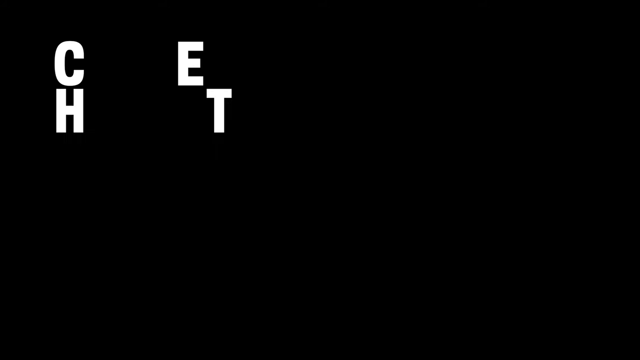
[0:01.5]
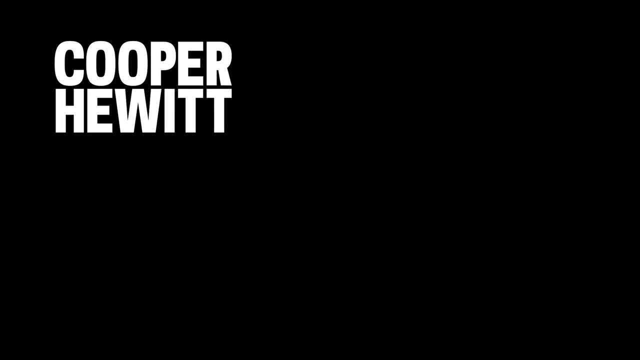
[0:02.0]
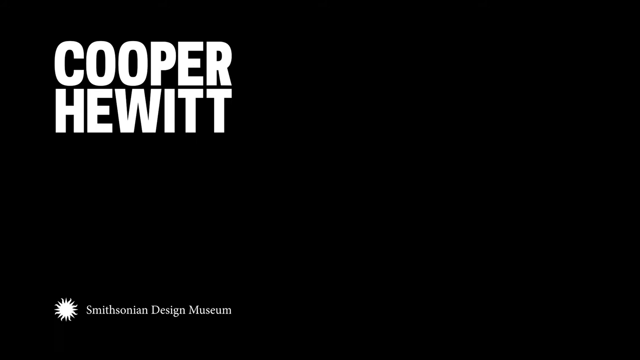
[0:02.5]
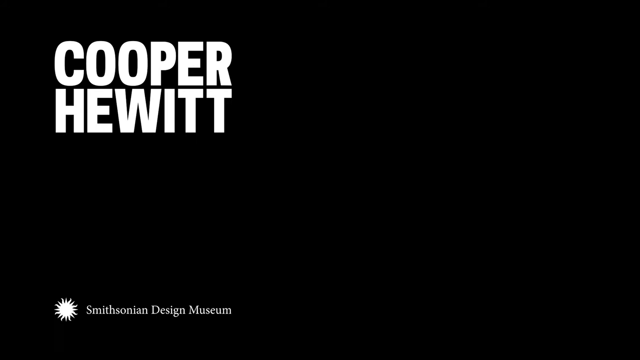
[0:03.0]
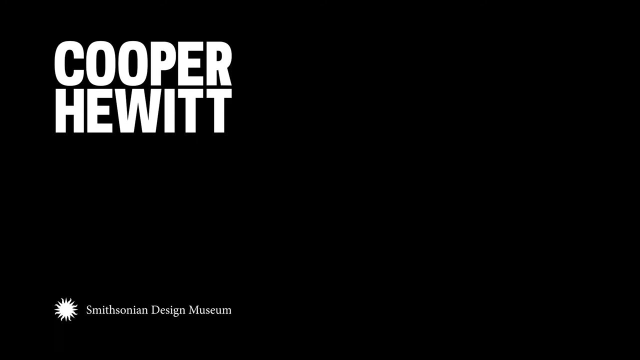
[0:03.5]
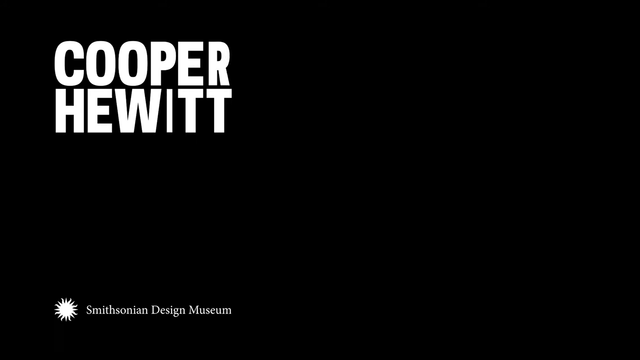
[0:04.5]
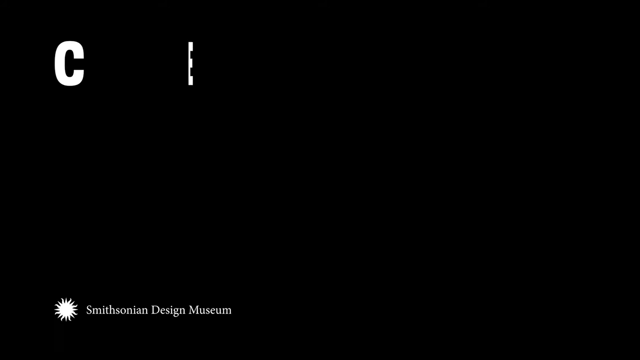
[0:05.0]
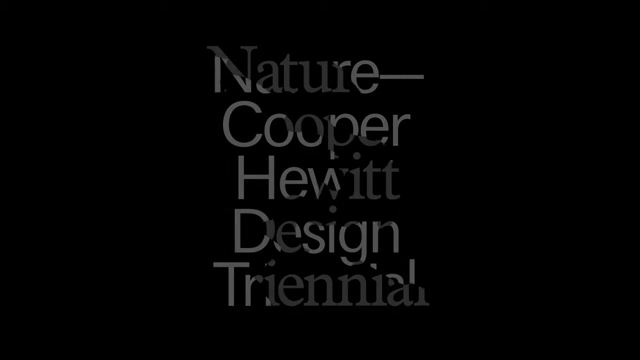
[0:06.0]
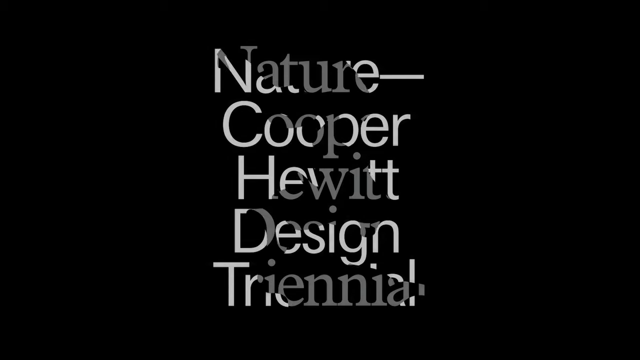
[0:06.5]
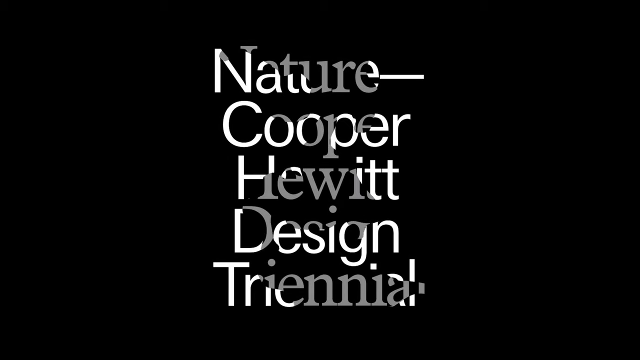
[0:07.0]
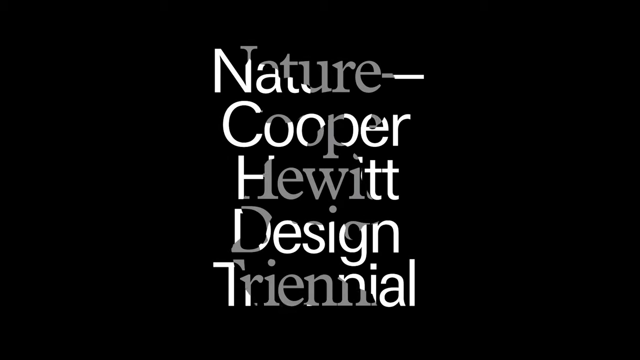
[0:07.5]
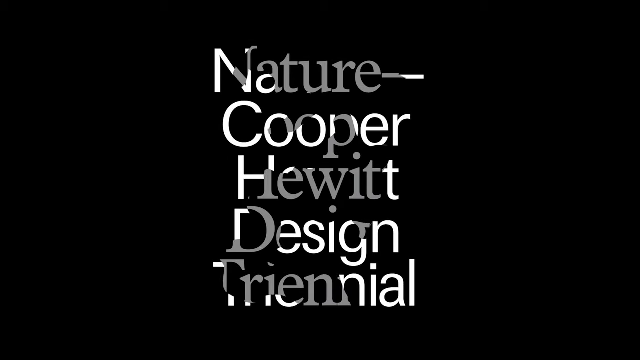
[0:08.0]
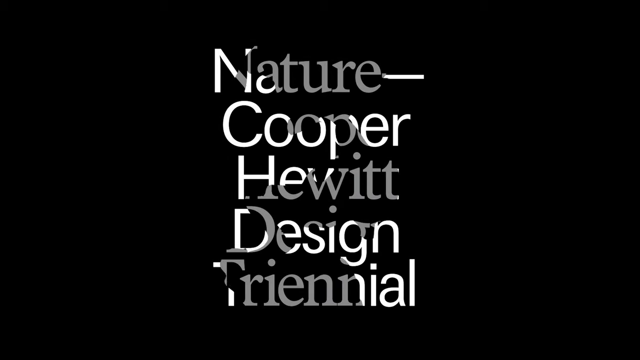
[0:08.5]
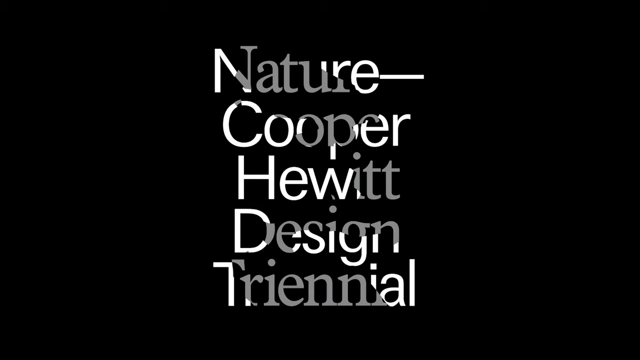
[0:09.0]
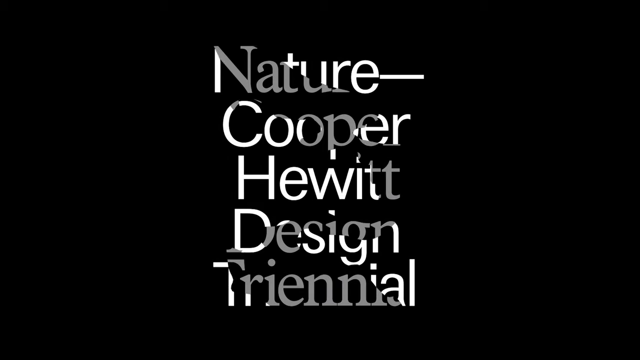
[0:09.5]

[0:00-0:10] A black background stays on the screen for about two seconds, then bolded white text reading "Cooper Hewitt" appears, and a white logo slowly pops up on the screen with the words "Smithsonian Design Museum." The text slowly goes off the screen, and the scene transitions to more white text reading "Nature Cooper Hewitt Design Triennial." A sort of light passes through the text, leaving some of it gray and some of it white. The screen then slowly transitions to another screen.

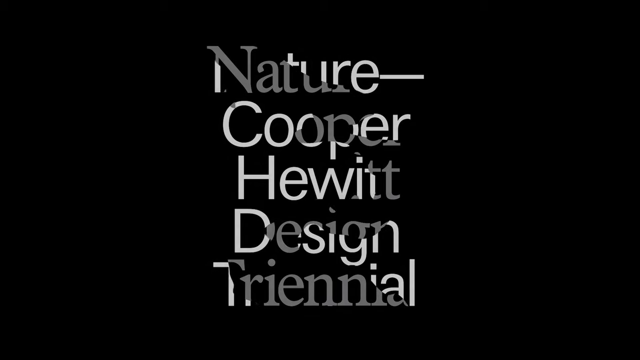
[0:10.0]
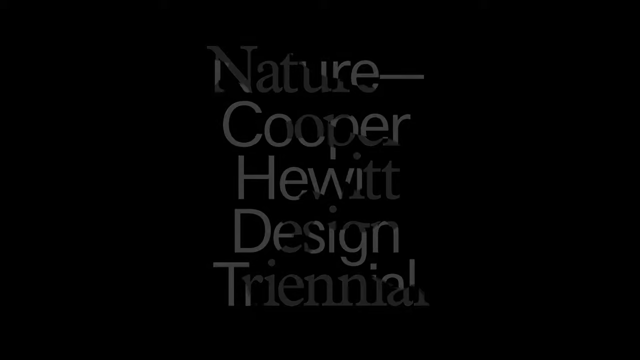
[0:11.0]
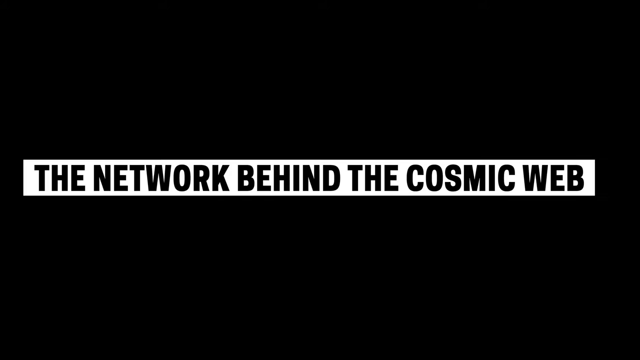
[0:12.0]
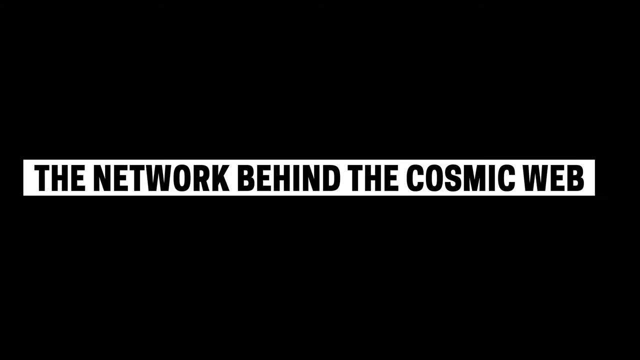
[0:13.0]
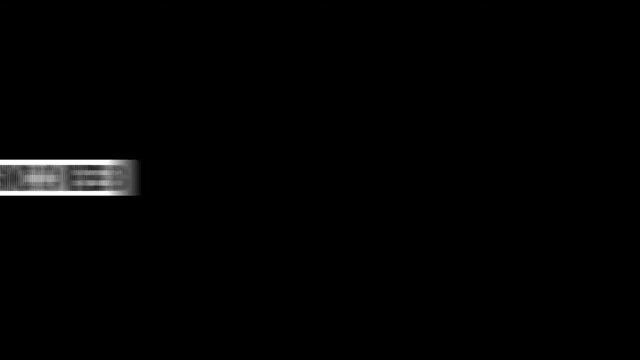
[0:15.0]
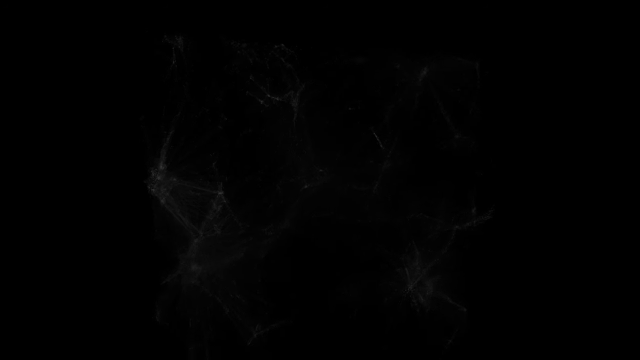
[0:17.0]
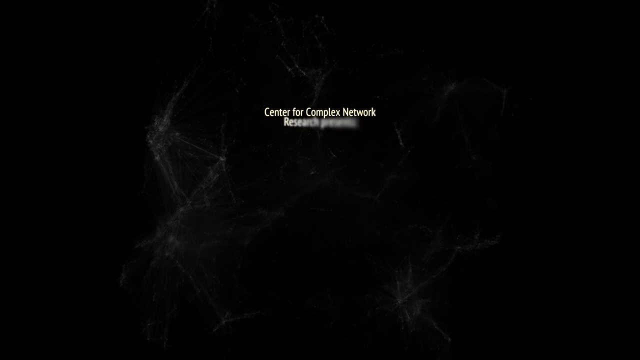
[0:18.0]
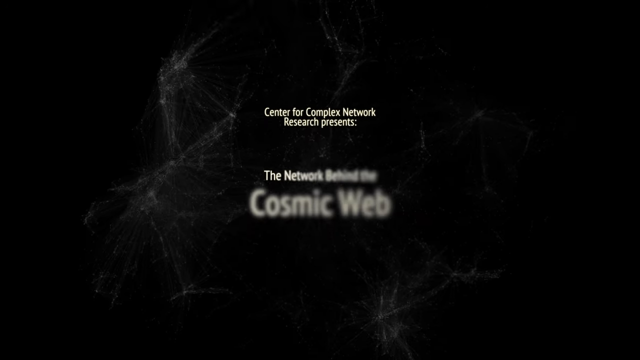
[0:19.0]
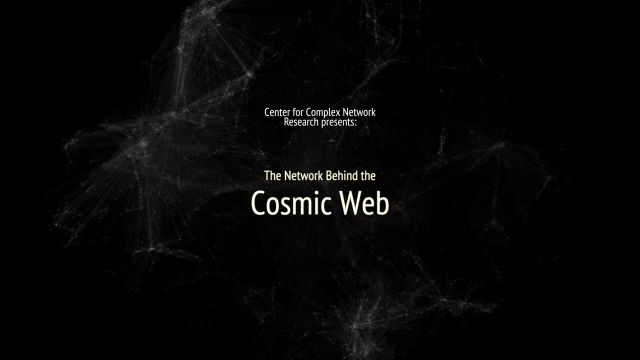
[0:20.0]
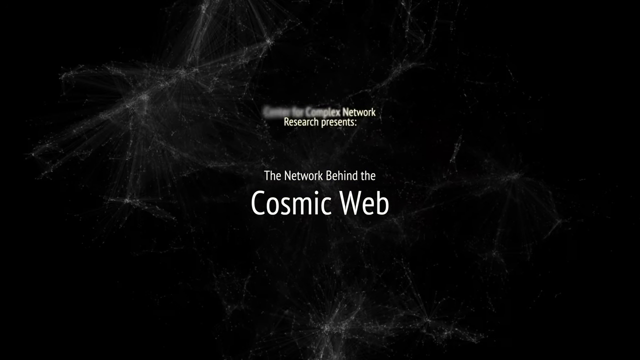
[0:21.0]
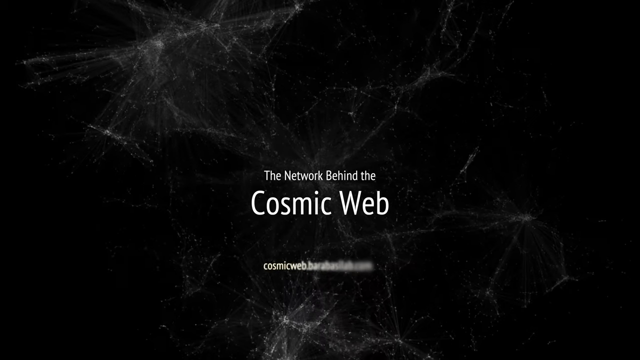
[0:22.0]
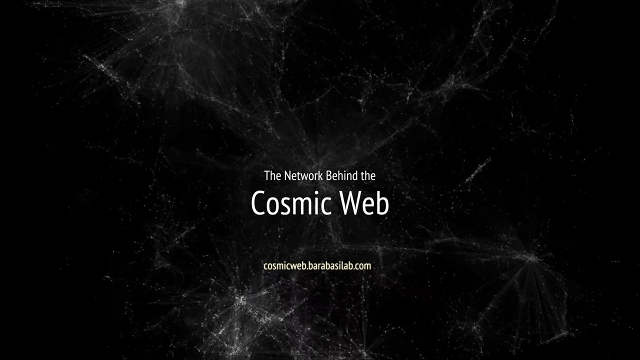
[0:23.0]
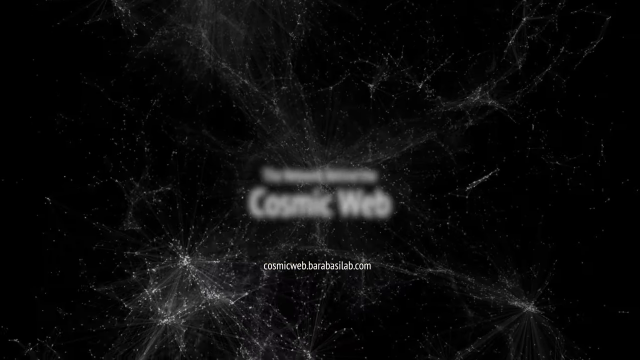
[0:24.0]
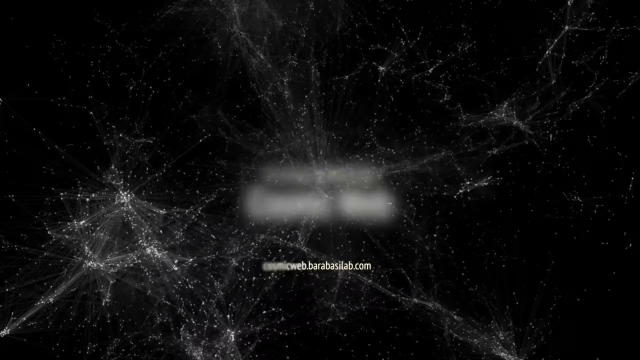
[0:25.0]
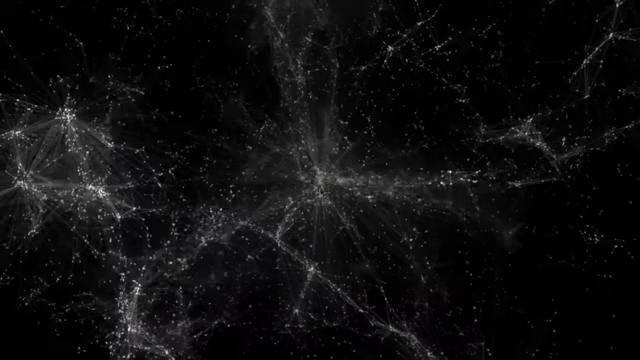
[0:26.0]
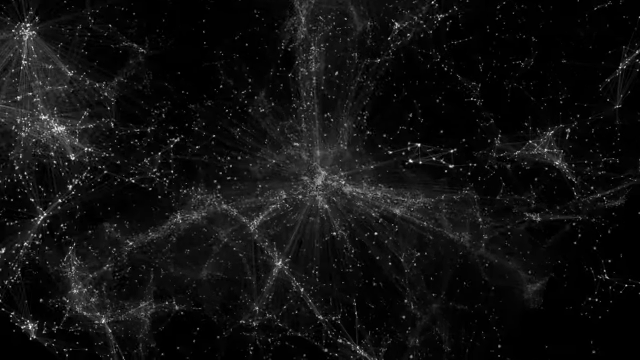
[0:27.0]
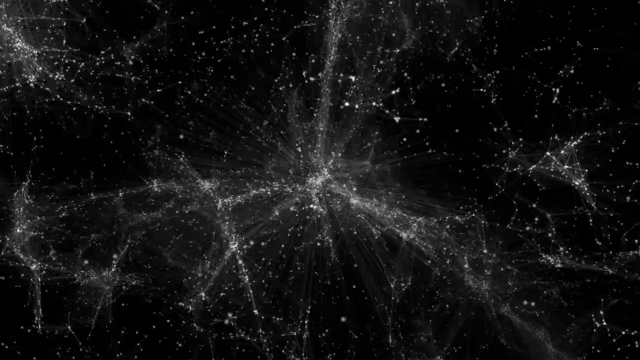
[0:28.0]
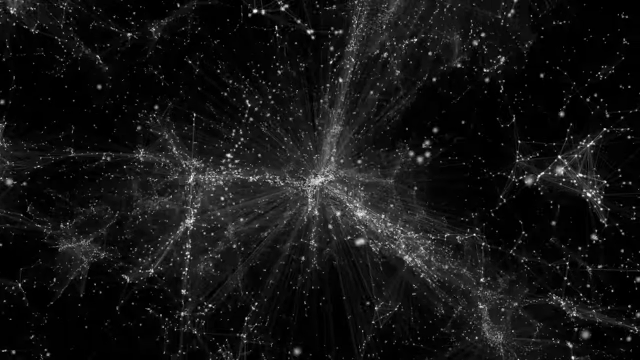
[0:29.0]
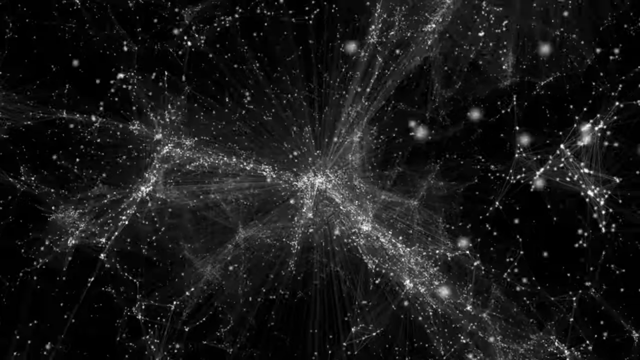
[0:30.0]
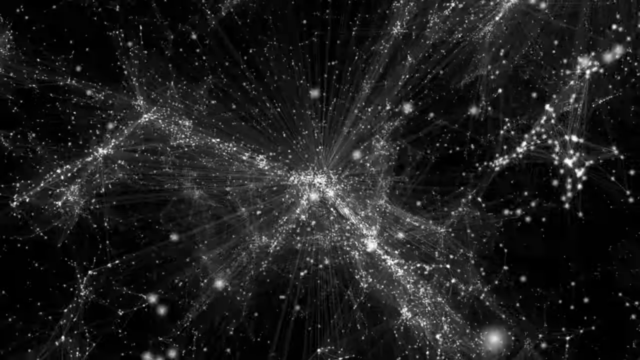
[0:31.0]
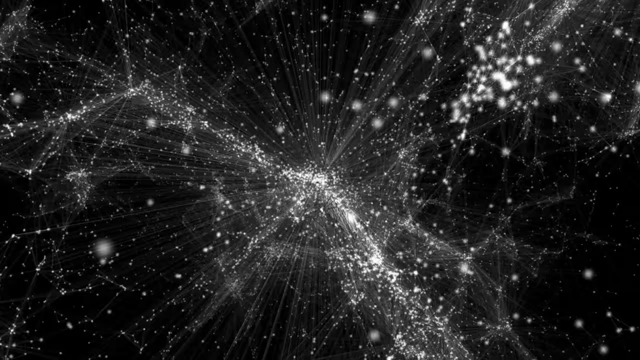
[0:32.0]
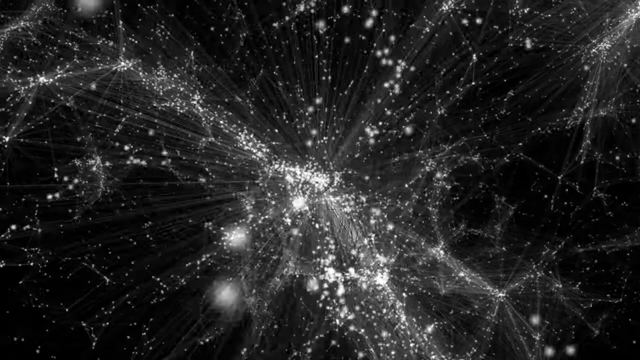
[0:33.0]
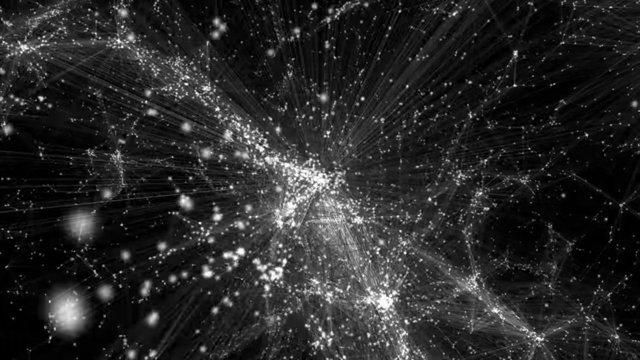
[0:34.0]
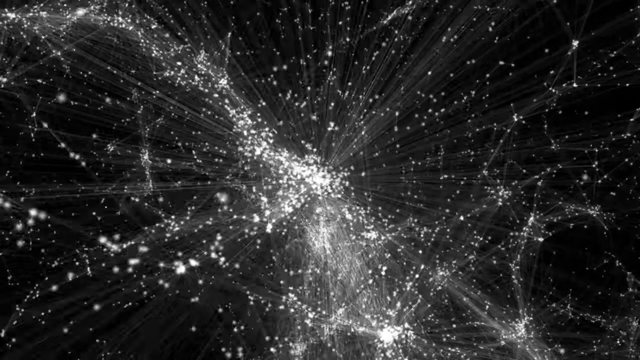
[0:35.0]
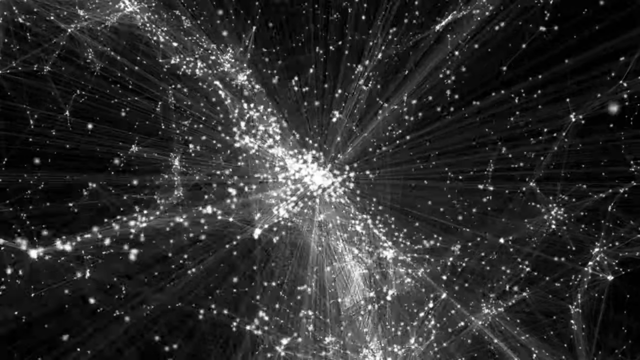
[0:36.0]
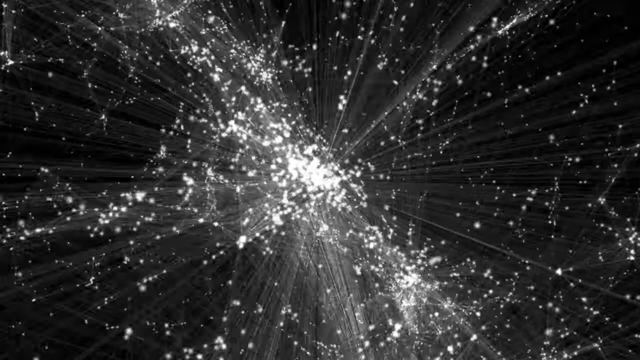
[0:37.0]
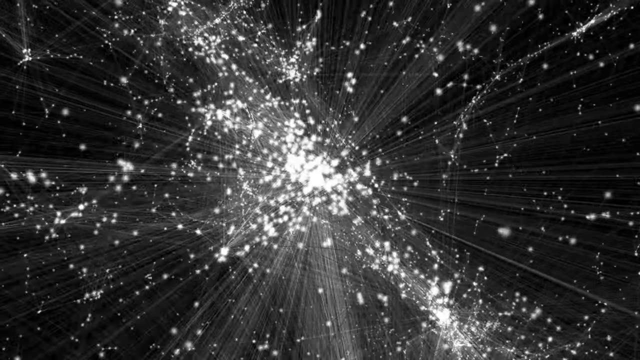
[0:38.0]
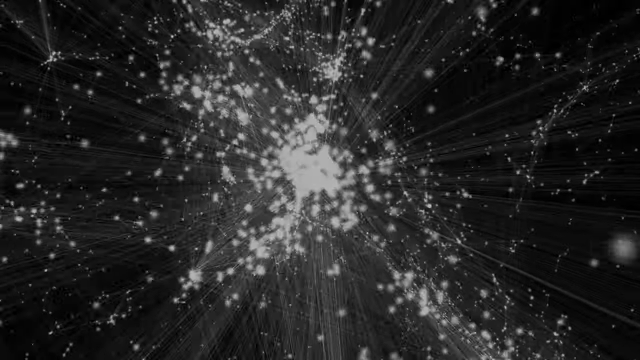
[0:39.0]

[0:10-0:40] White text on a black background reads "Nature Cooper Hewitt Design Triennial," with a gray, blob-like shape moving through the text while some of the other text stays white. It fades to a black background with a white banner in black reading "the network behind the cosmic web," which stays on the screen for a couple of seconds before quickly swiping off to the left. Next, a gray object swirls in the center of a black background with white text reading "Center for Complex Network Research presents the network behind the cosmic web." The text slowly goes away from the top, and additional text appears at the bottom reading "cosmicweb.berabizalab.com." Small white things move around, and what looks like a bunch of little white dots are all connected to each other. The camera continues to move to the right and closer to a cluster of these little white dots. The scene then transitions to a black background with more white dots.